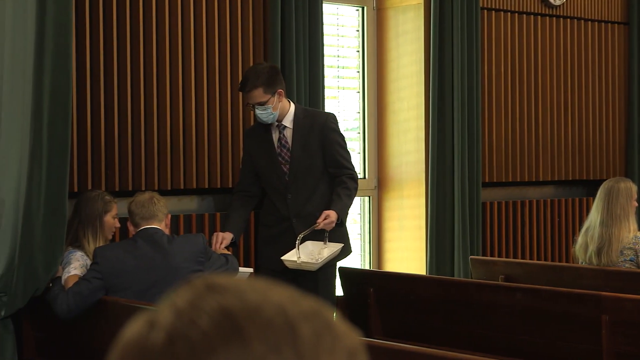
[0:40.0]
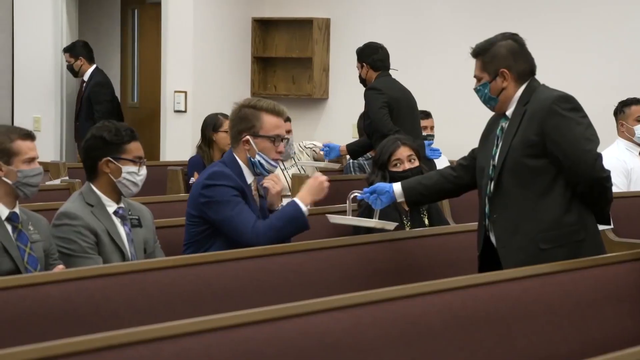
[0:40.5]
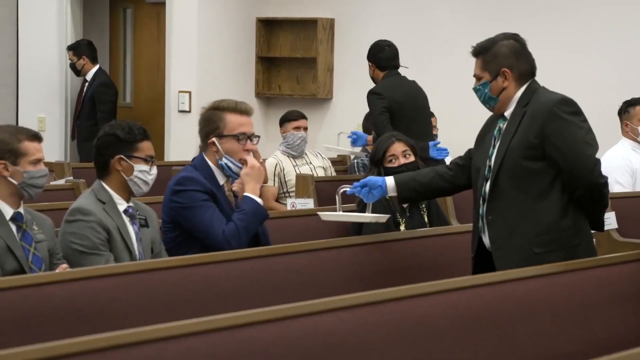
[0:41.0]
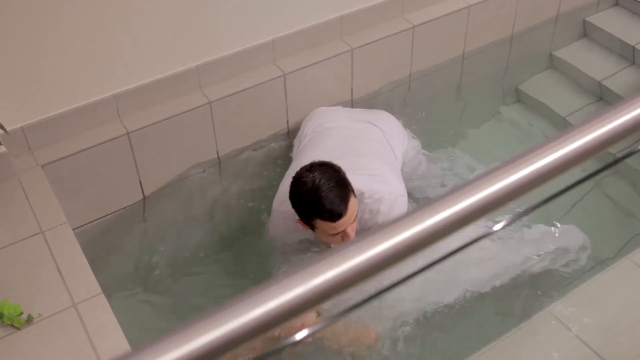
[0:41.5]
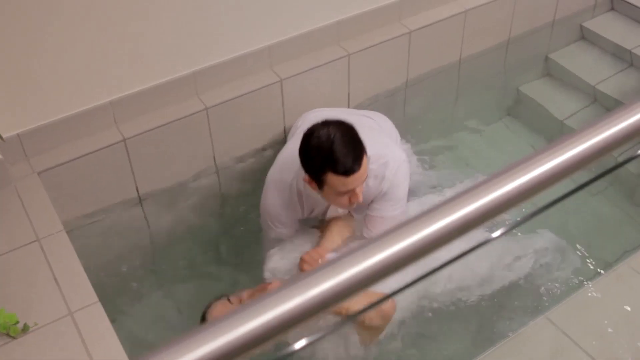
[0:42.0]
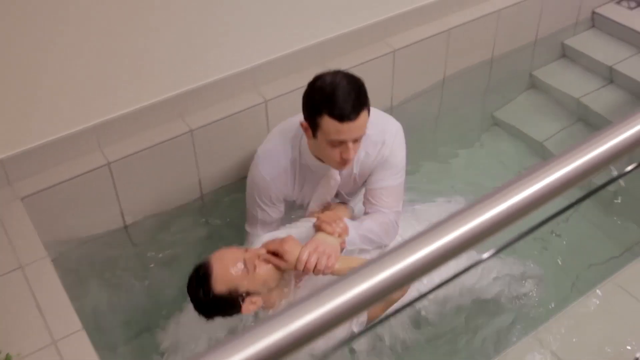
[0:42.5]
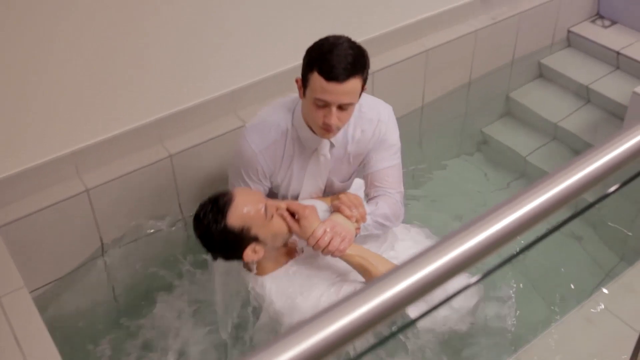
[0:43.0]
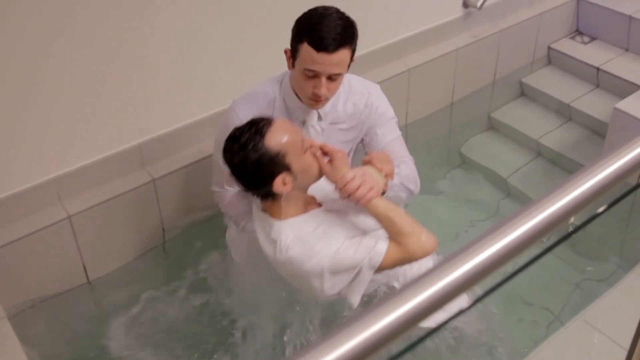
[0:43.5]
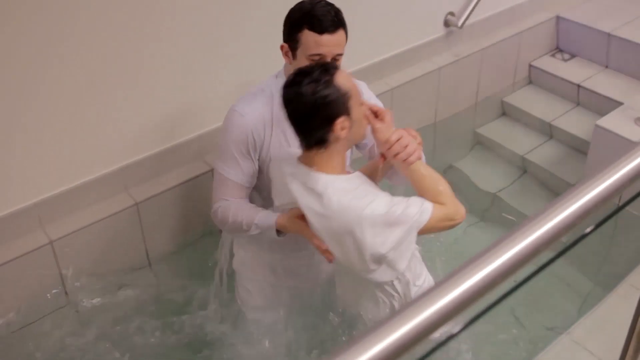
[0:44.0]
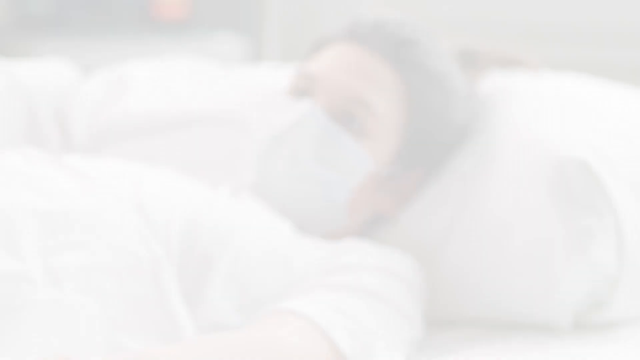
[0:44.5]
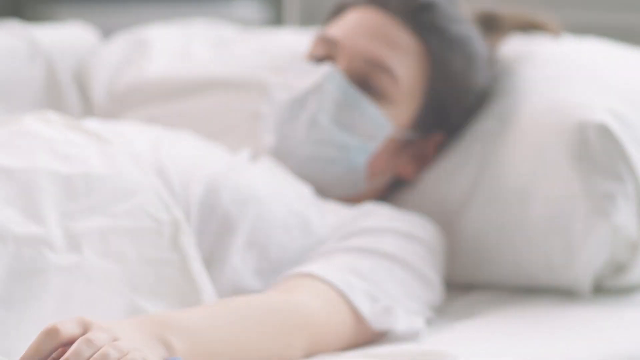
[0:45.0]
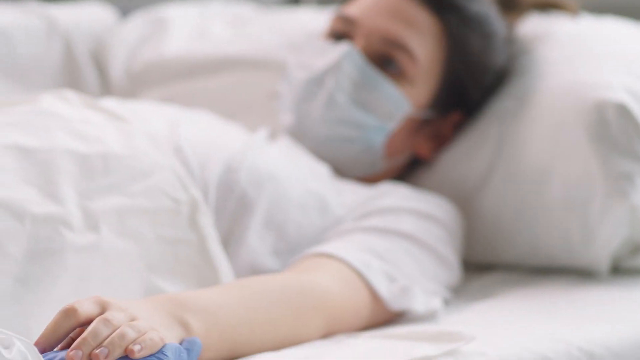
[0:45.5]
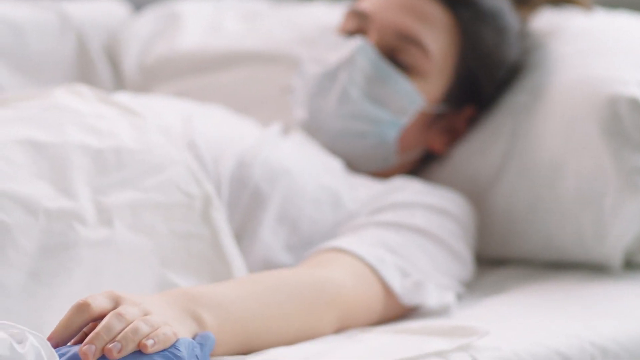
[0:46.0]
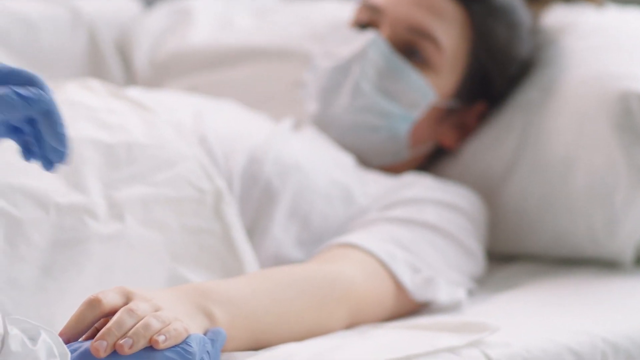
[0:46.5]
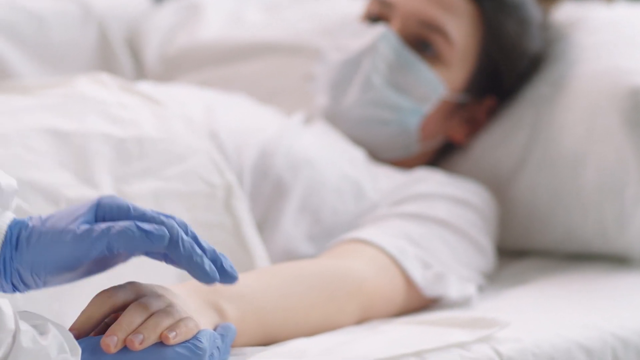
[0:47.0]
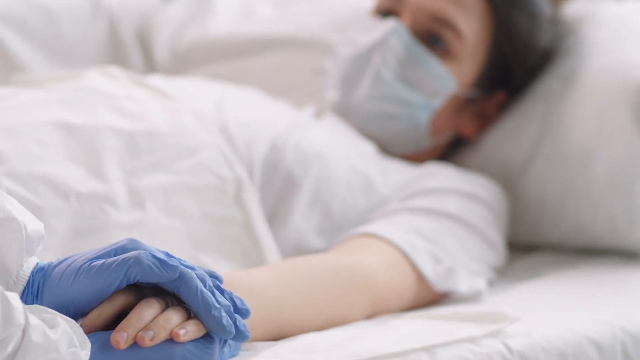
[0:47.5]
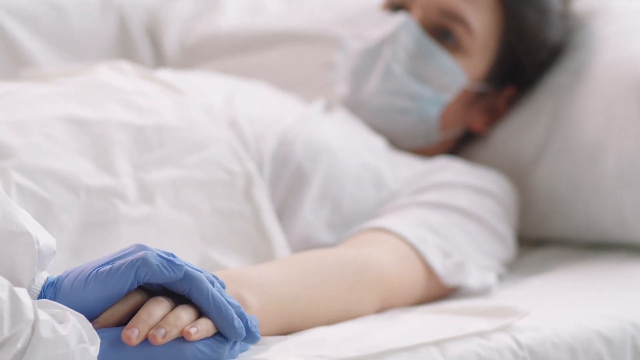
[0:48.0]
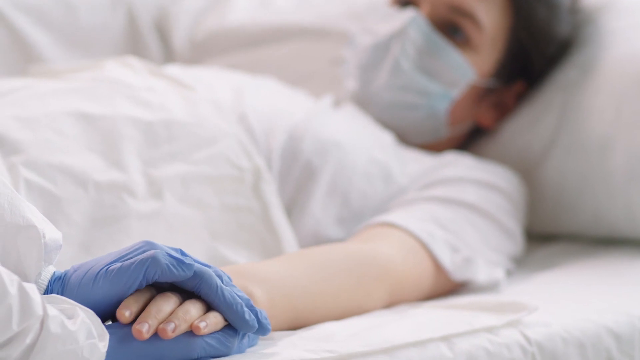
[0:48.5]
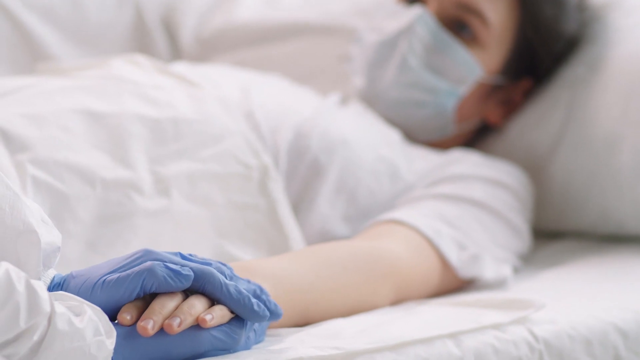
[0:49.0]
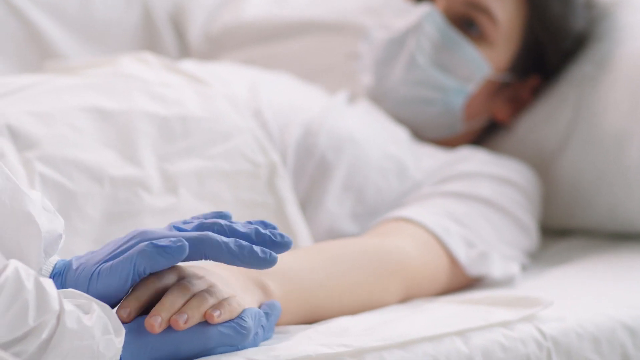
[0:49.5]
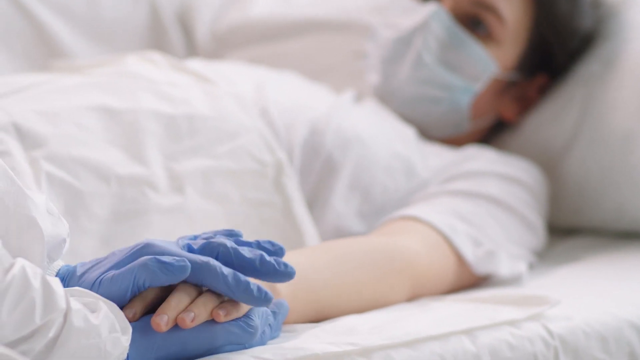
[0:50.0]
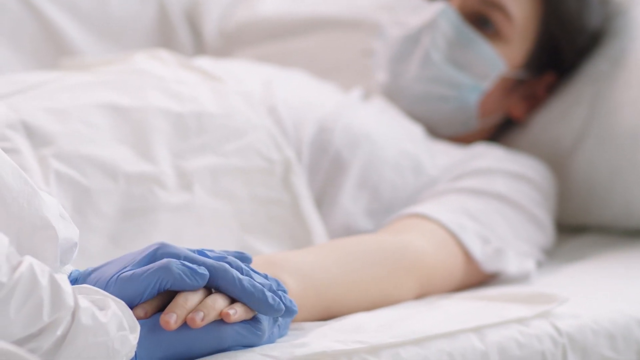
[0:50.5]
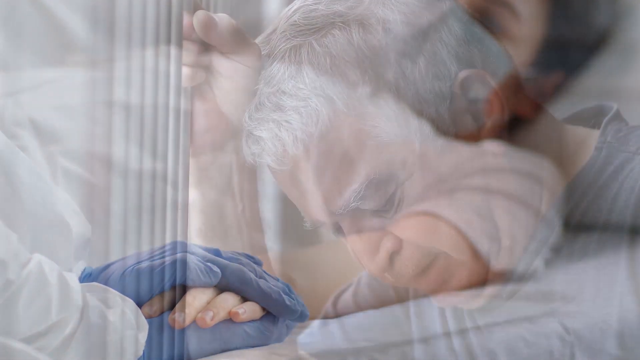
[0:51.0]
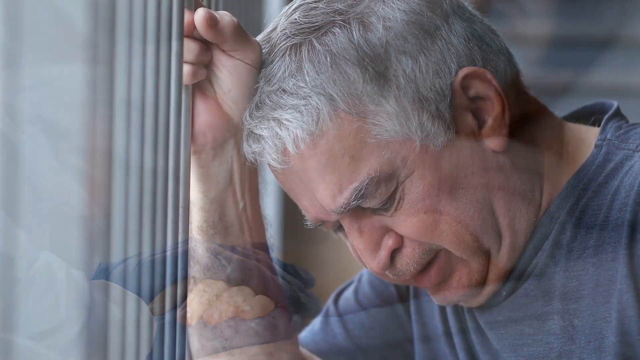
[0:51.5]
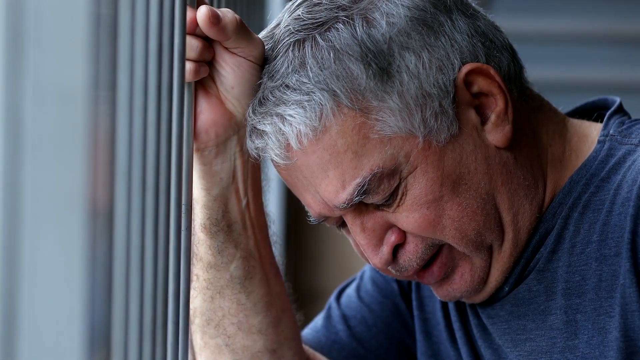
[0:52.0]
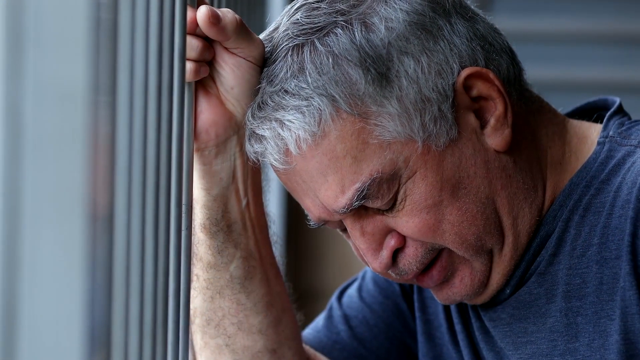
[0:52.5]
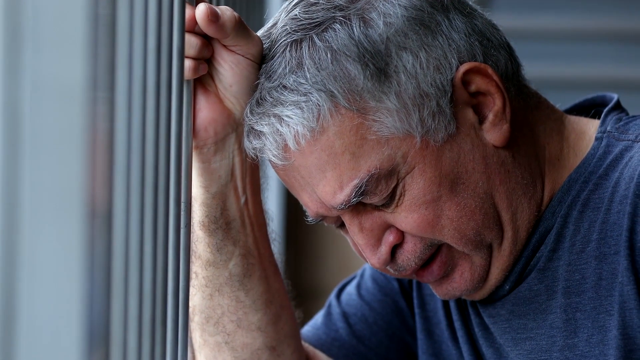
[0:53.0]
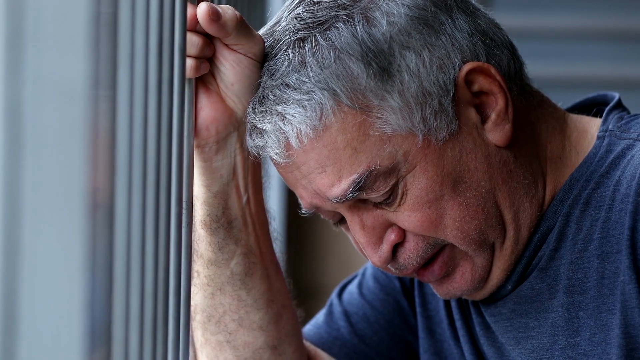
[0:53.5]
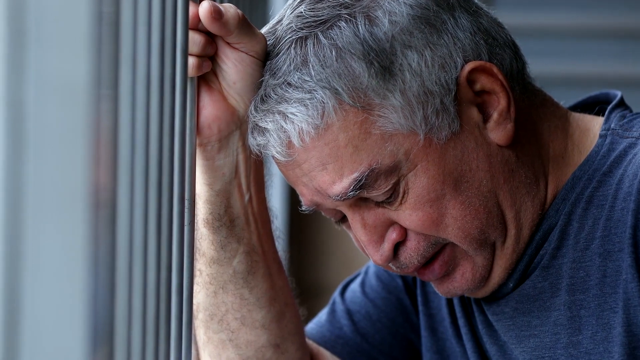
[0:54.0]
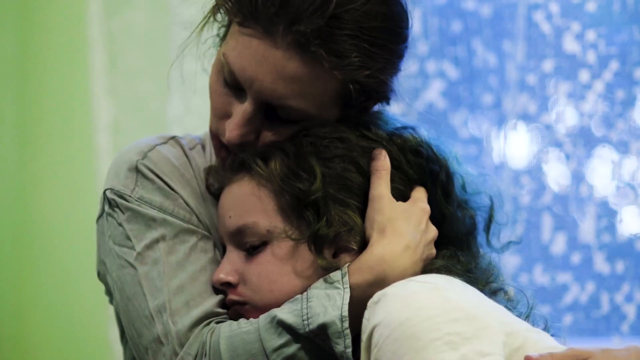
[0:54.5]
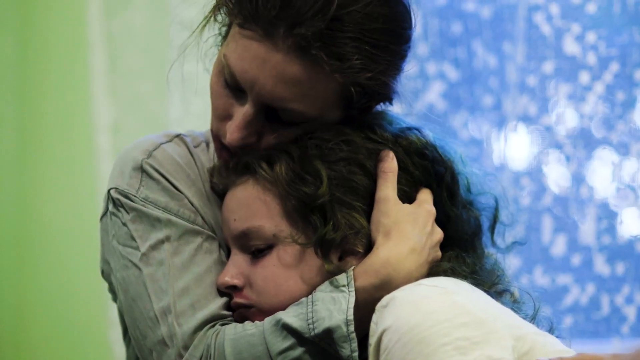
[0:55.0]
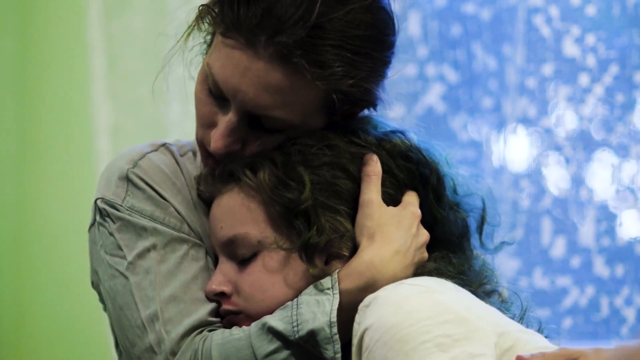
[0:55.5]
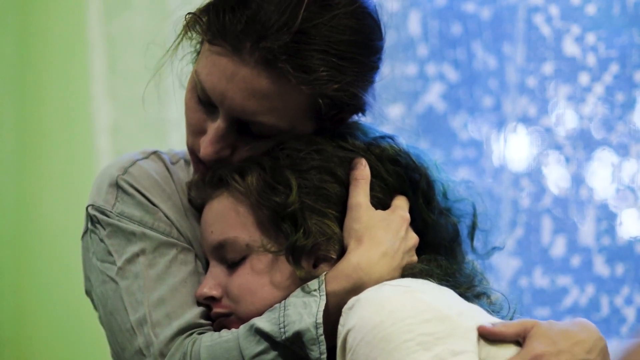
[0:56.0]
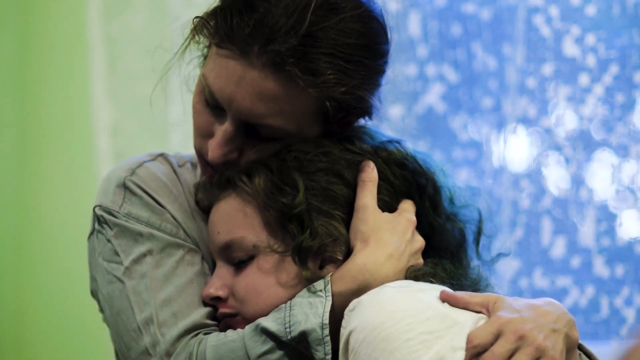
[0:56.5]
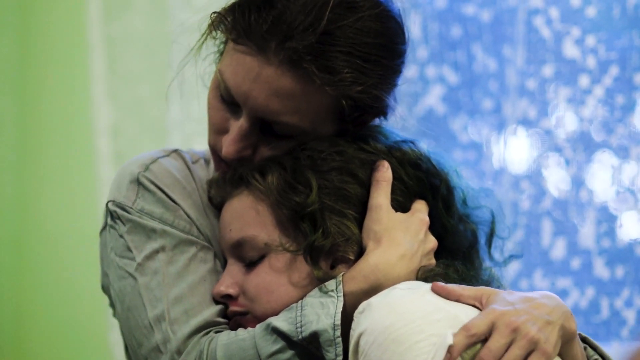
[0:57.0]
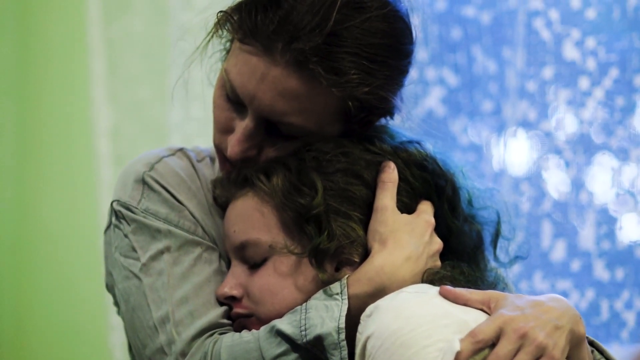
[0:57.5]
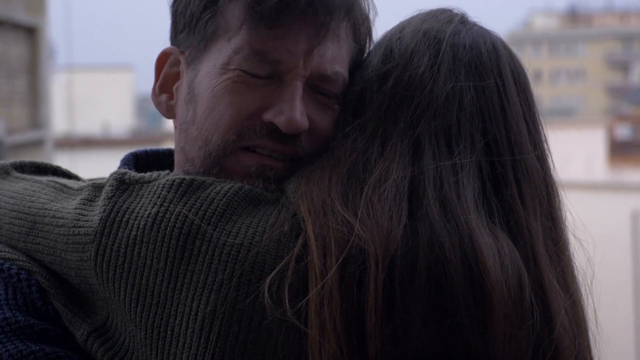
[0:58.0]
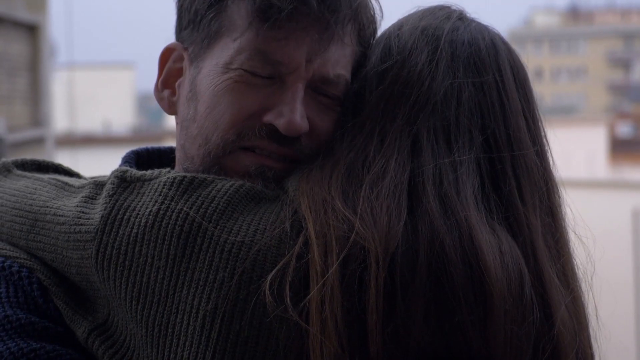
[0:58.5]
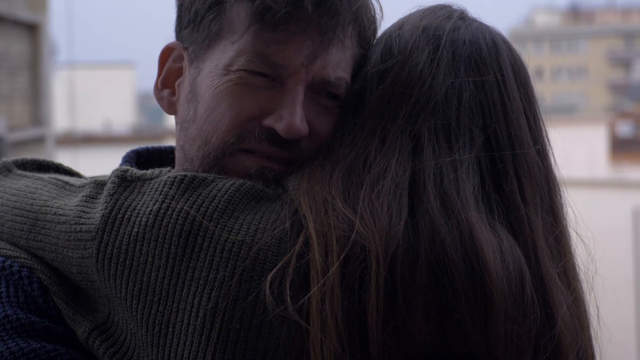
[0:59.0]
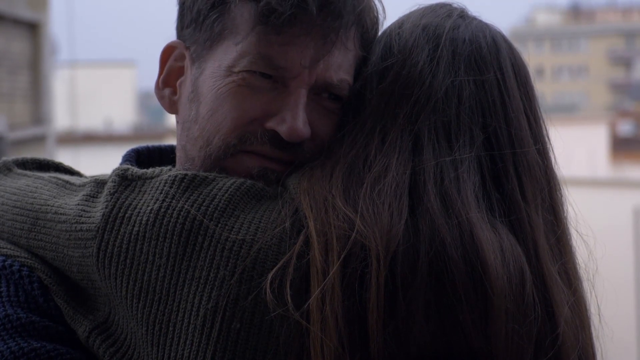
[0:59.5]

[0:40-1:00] The text "Voice of Dieter F. Uchtdorf, the Quorum of the Twelve Apostles" is shown. People are in a church, and the man with the plate wears a blue mask. People take things from the plate and put them in their mouths, so it appears to be a communion plate rather than an offering plate. Two men who look like twins, both with short dark hair and both wearing white, appear at a baptism, one baptizing the other; the man being baptized seems to wear a white robe, while the one baptizing wears a white shirt with a white tie. The baptismal font is right behind the podium for the minister or pastor. A man in what is probably a hospital bed wears a blue mask, and a blue-gloved hand rests on top of his hand, like a hospital worker comforting him. A very old man looks upset, presumably about someone being sick.